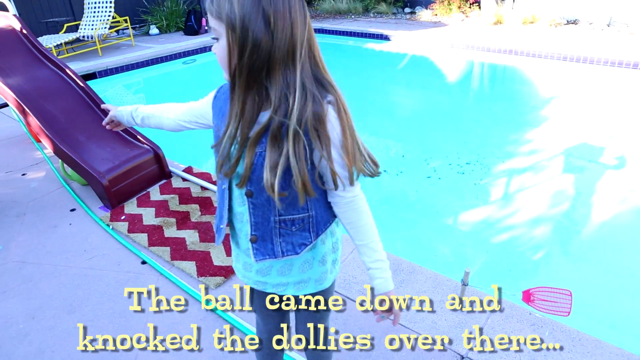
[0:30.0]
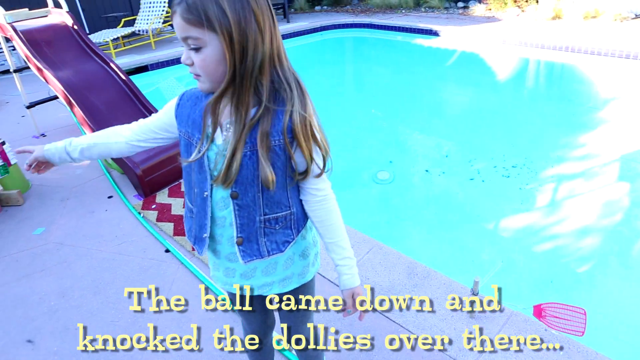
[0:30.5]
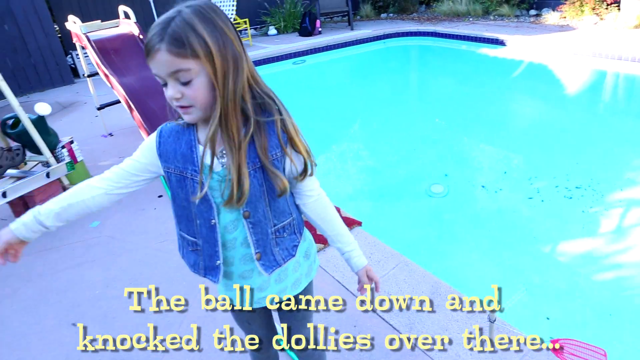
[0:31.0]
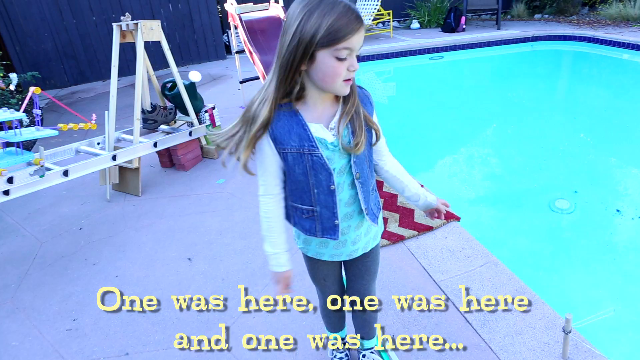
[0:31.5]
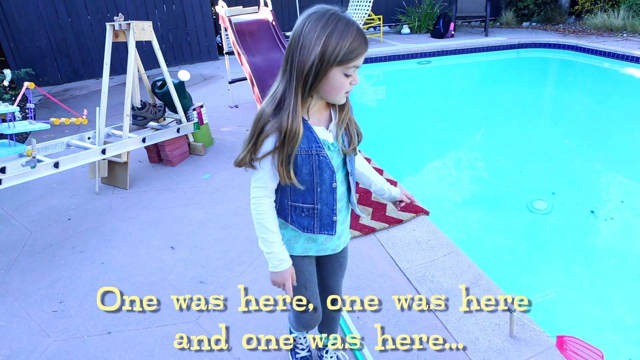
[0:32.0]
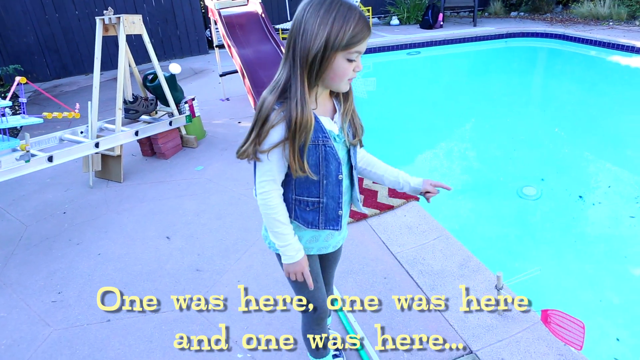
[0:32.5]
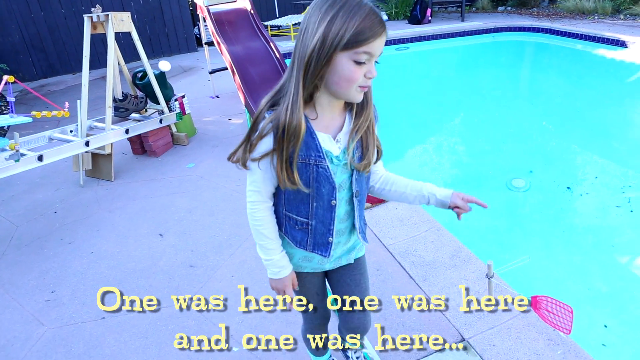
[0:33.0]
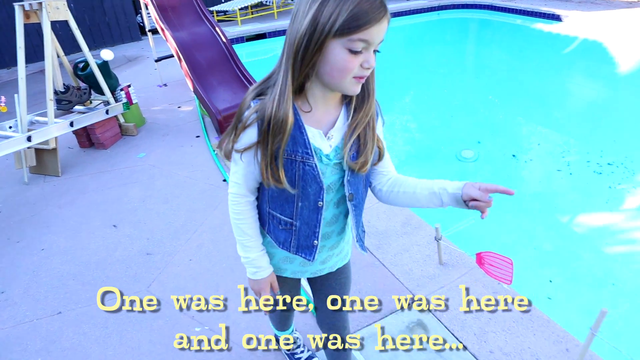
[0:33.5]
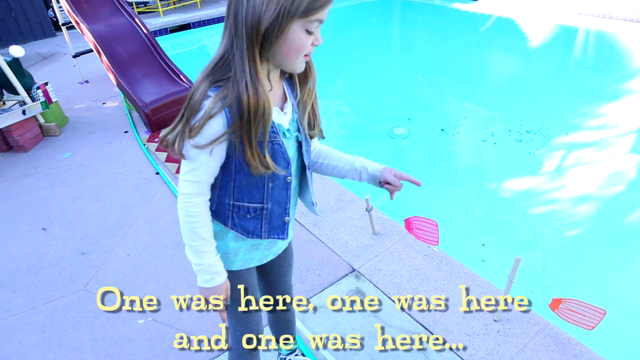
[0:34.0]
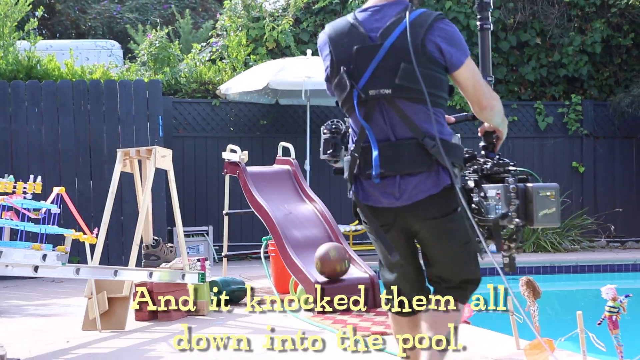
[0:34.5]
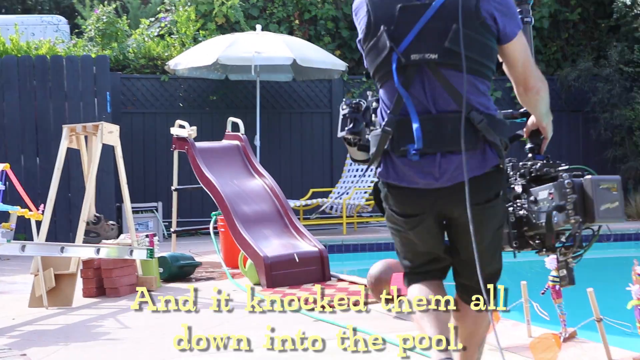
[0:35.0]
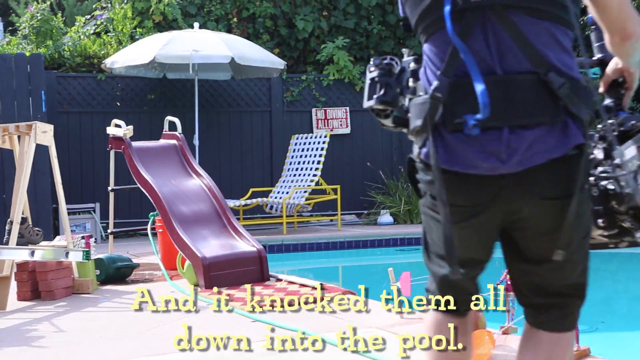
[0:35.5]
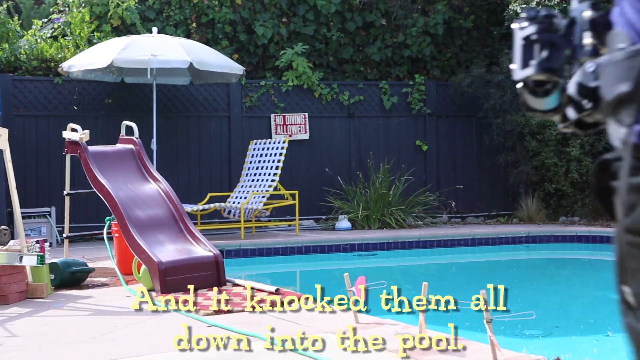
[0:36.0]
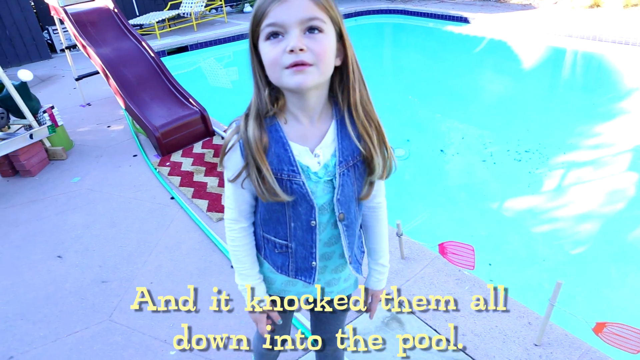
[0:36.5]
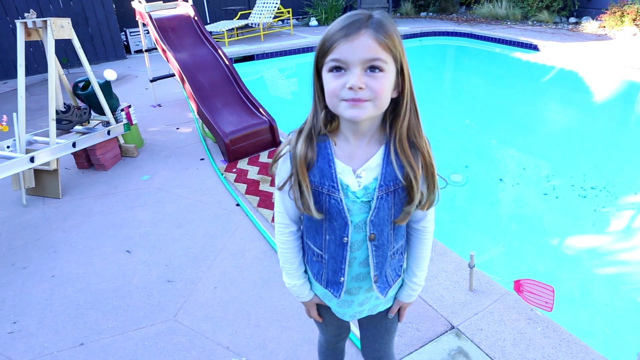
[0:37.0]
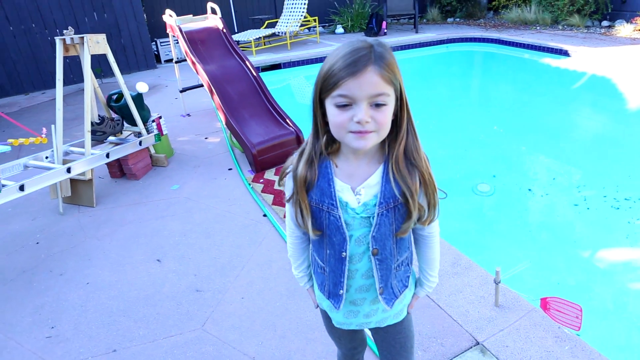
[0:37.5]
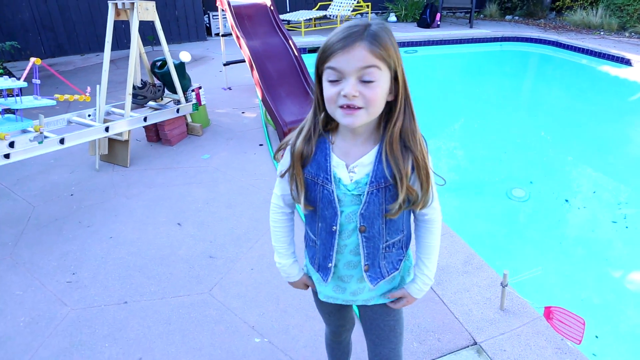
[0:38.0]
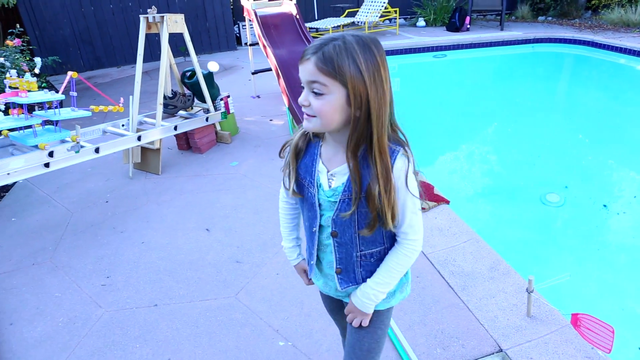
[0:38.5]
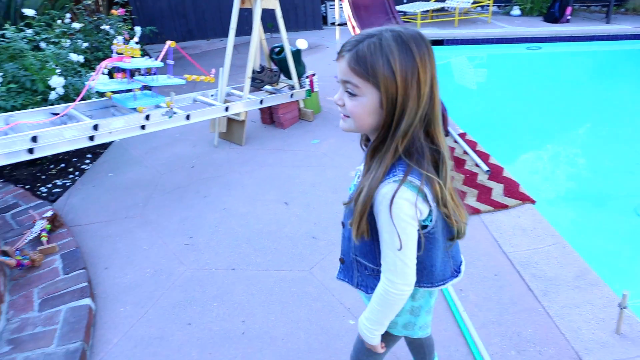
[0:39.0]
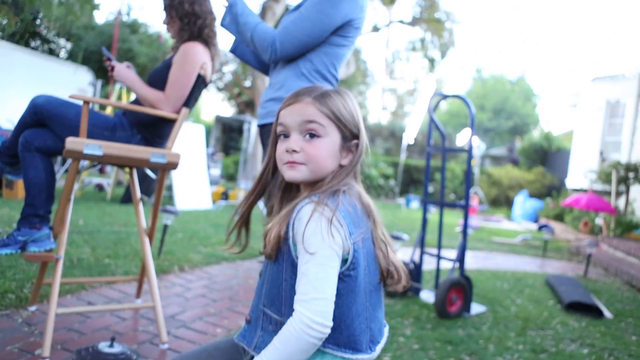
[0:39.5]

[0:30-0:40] The six-year-old girl inventor demonstrates how her invention works, pointing and showing the machine operating: a foot kicks a bowling ball that is on top of a slide, and the ball runs down the slide and knocks some action figures or Barbie dolls into the water of the pool. One girl and one man are in the scene. The girl is wearing a white blouse, a blue vest and denim jeans, and has long brown hair. The setting is an outdoor backyard with a swimming pool on a sunny day, and it appears to be warm based on the way people are dressed.